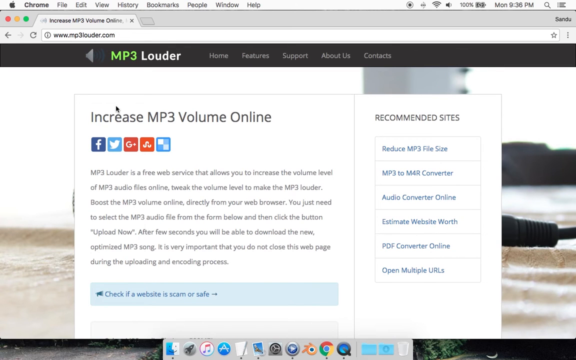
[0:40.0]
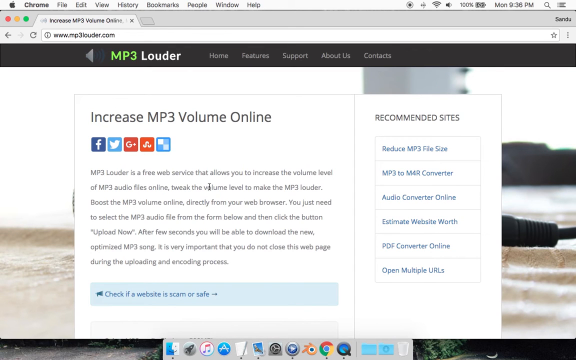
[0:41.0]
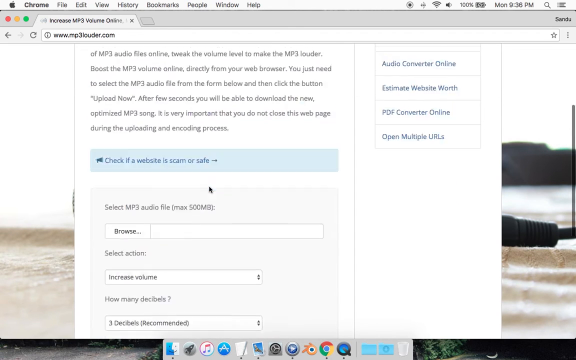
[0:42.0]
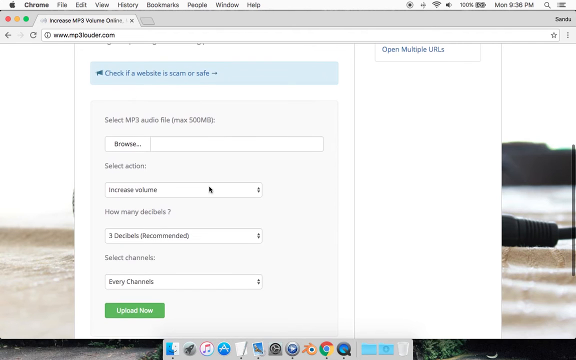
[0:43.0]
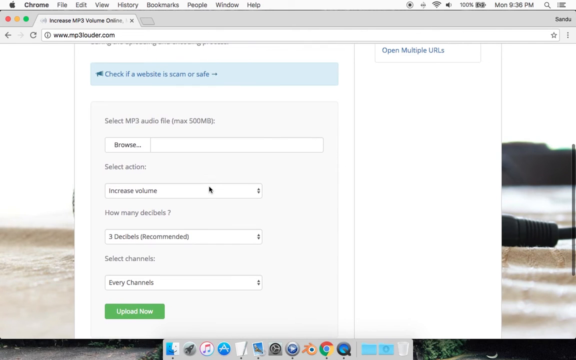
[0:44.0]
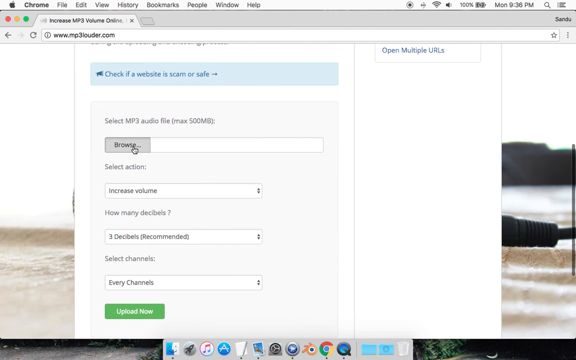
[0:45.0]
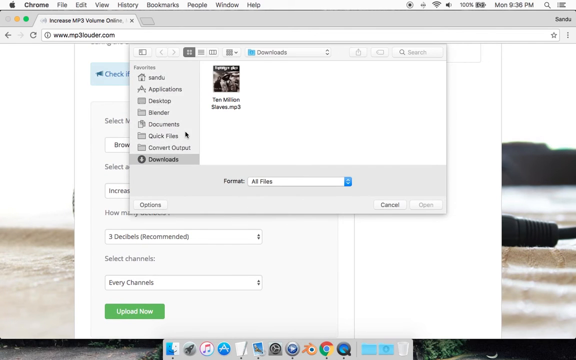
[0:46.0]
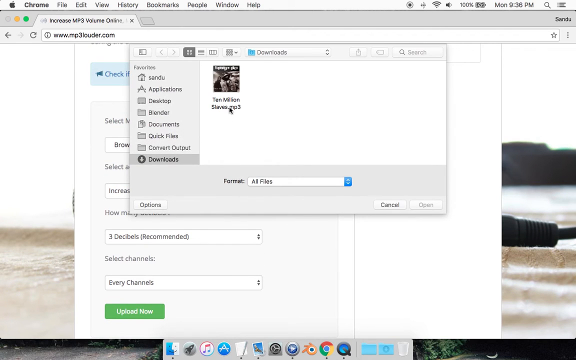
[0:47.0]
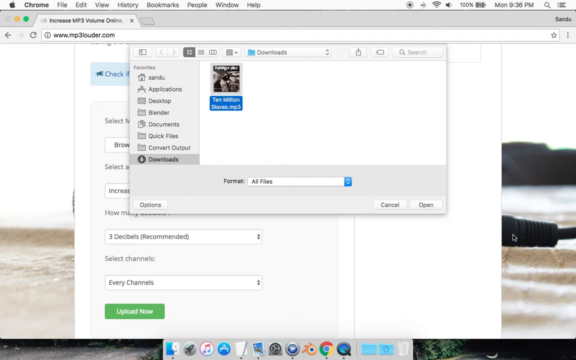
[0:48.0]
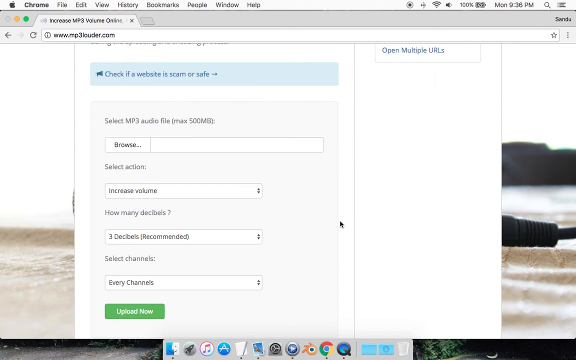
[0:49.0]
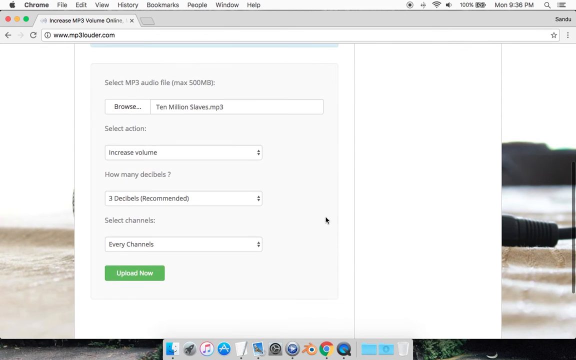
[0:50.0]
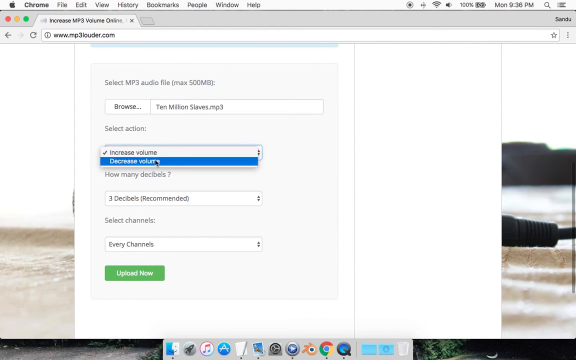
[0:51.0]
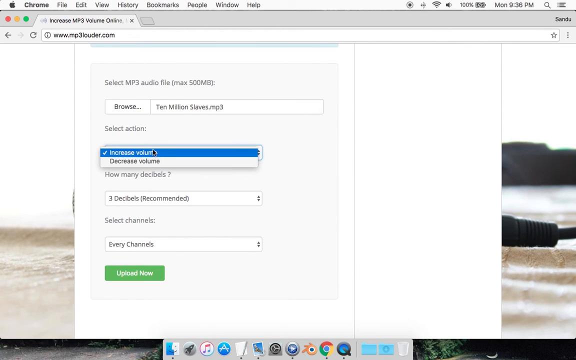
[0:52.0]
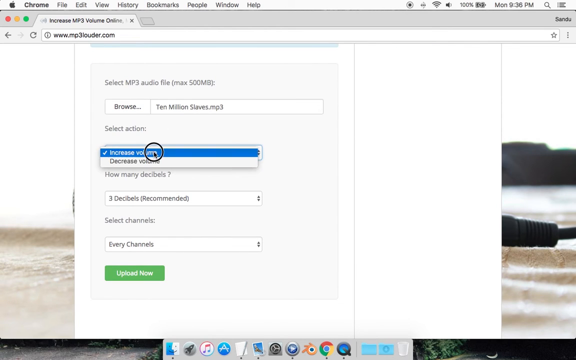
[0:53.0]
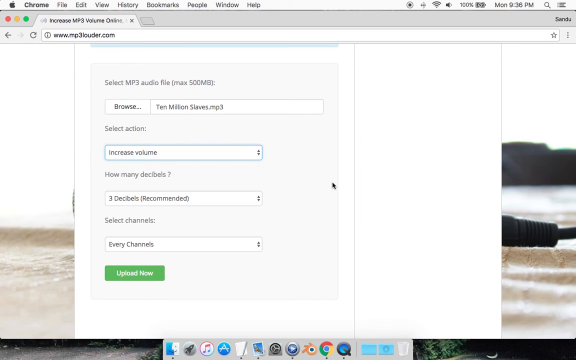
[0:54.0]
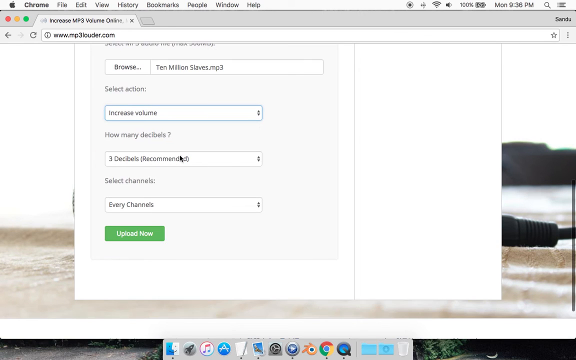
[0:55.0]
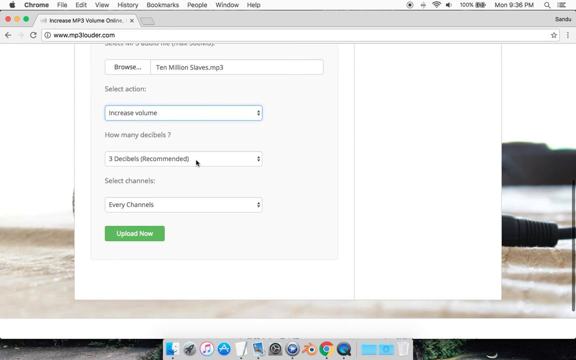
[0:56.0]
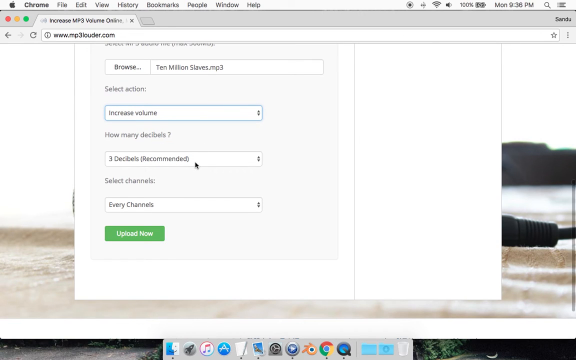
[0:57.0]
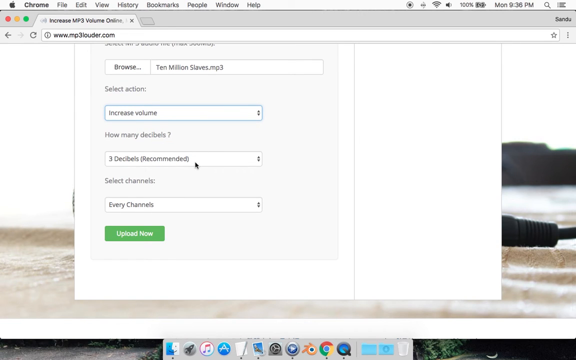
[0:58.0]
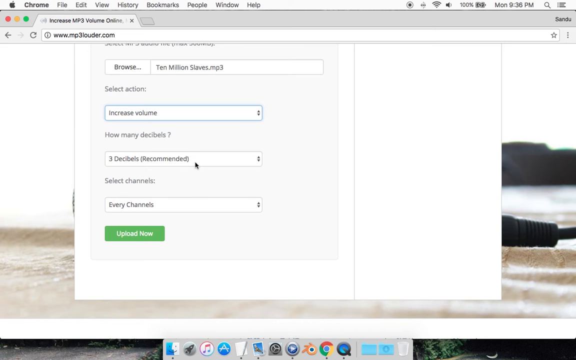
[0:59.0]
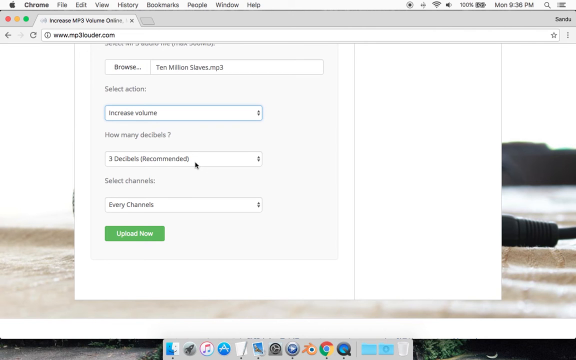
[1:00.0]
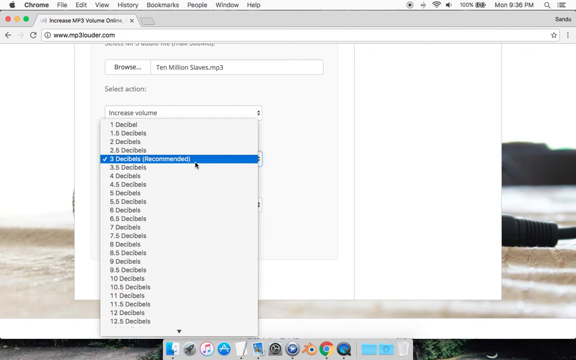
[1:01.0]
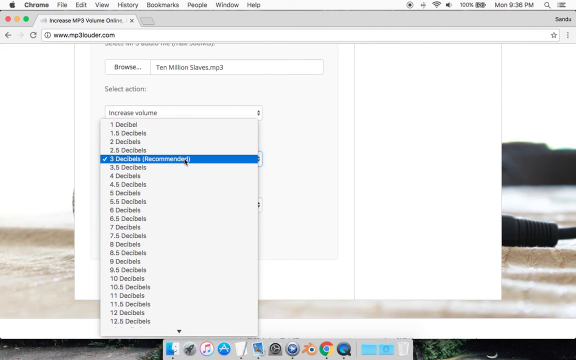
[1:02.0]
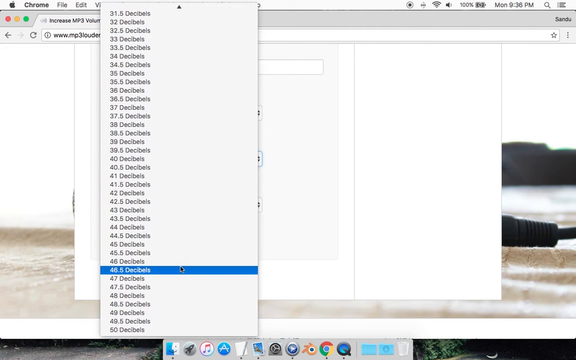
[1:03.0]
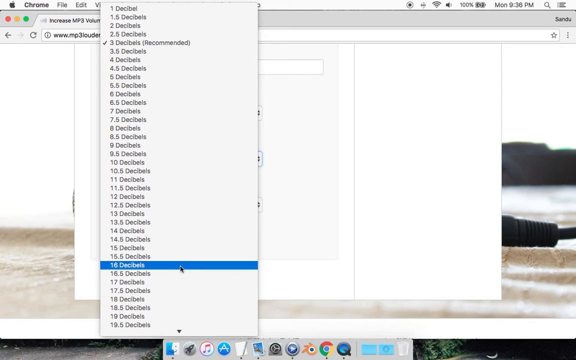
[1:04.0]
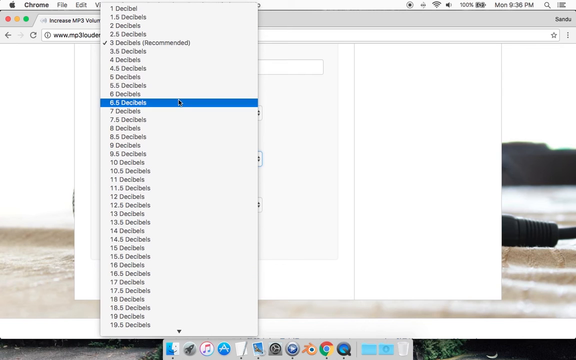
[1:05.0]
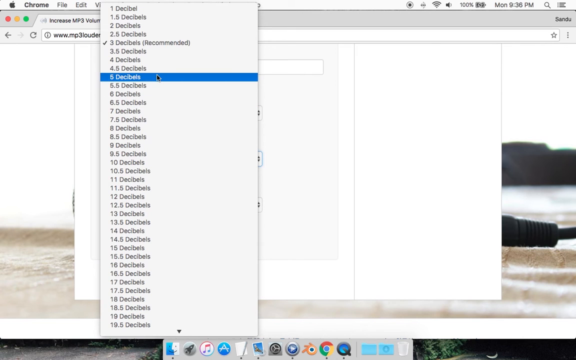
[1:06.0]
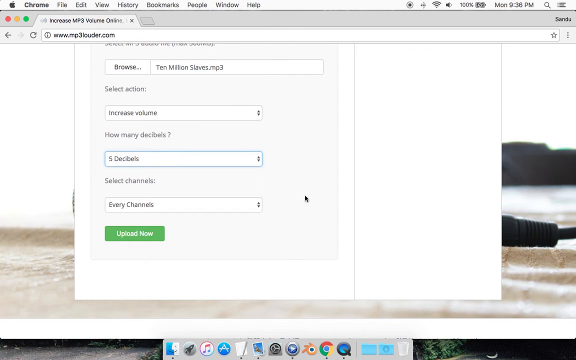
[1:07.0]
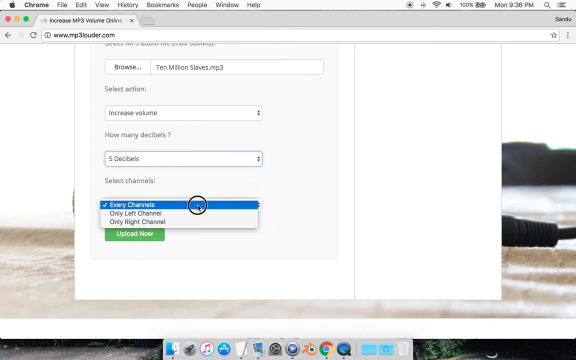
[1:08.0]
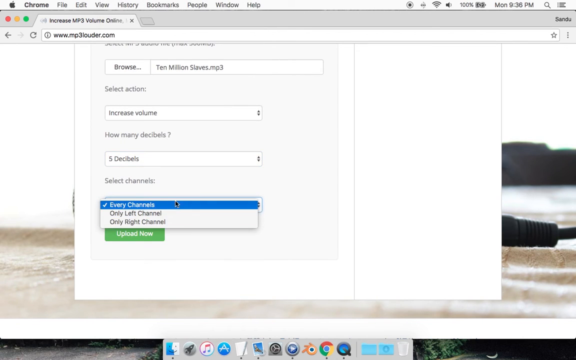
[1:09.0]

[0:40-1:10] The website mp3louder.com is open, with a heading at the top of the home page that says "Increase mp3 volume online", followed by social media share icons and a paragraph about what mp3 louder is and how to install it. The user scrolls down the page to a section for uploading an mp3 file and performing an action such as increasing its volume. The user clicks the Browse button, a window showing the Downloads folder comes up, and the user selects the file "10millionslaves.mp3" and clicks the Open button. The file's title then appears in the input box next to the Browse button. The user opens the dropdown menu under the Select Action section and chooses increase volume. Next they open the dropdown menu under the how many decibels section, scroll down the large menu that pops up, and select five decibels. Then they open the dropdown menu under the select channels section, which shows the options "every channels", "only left channel" and "only right channel".